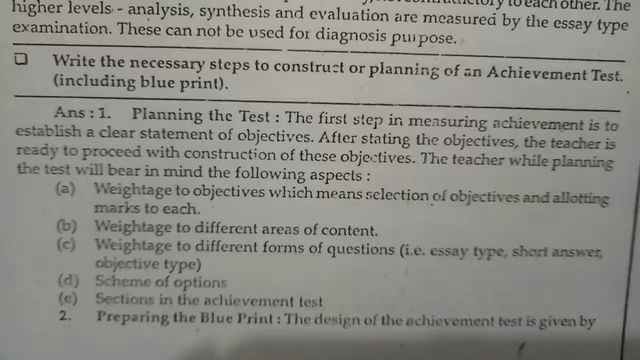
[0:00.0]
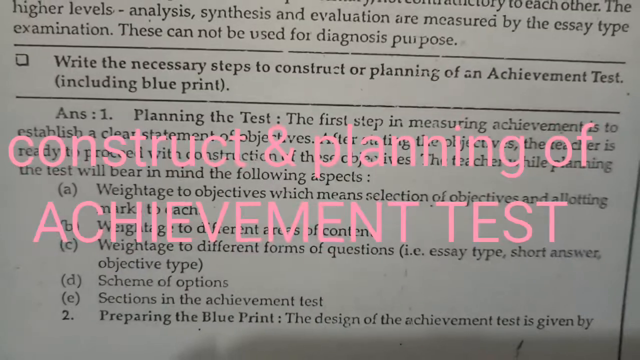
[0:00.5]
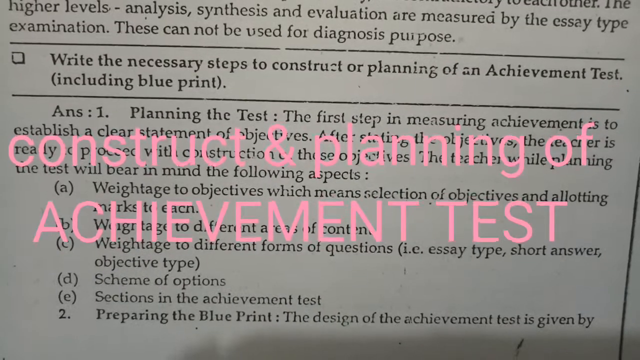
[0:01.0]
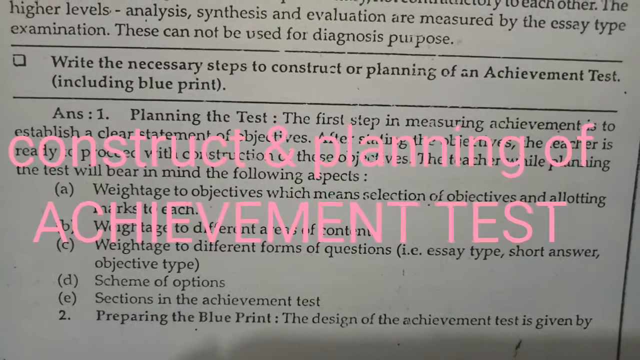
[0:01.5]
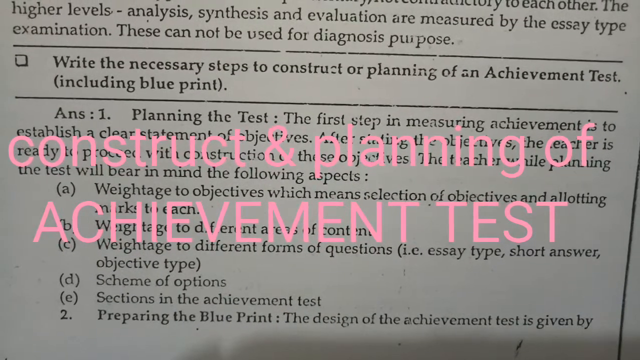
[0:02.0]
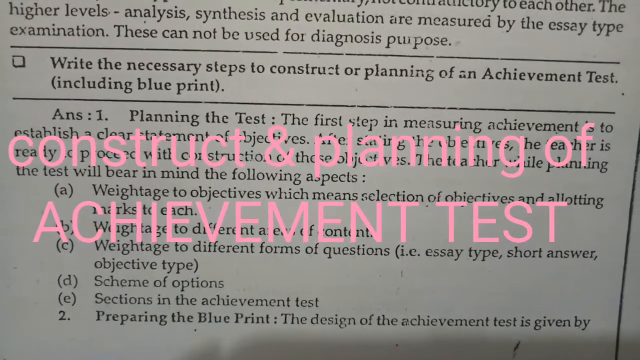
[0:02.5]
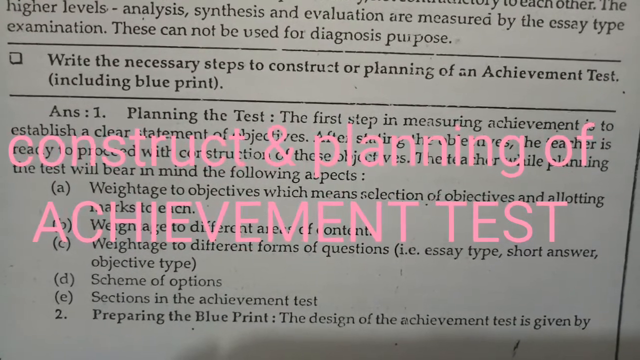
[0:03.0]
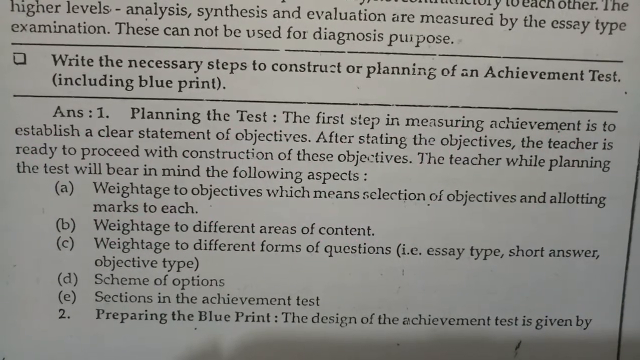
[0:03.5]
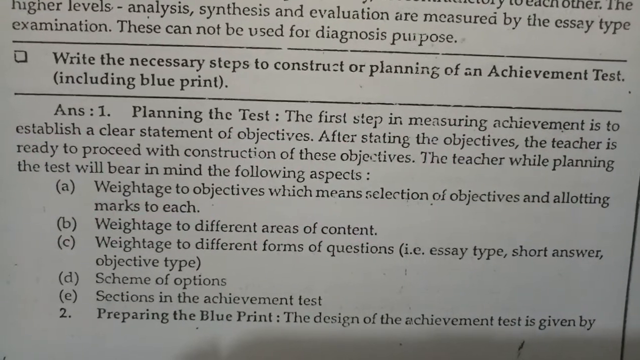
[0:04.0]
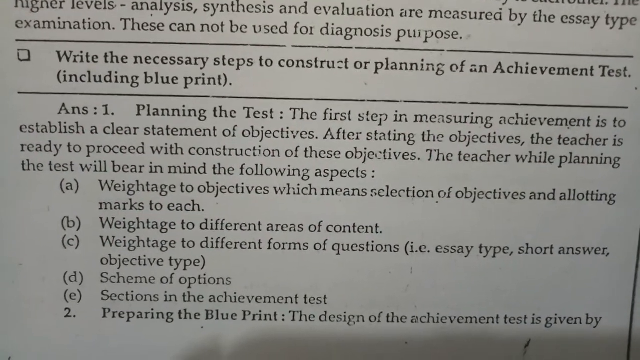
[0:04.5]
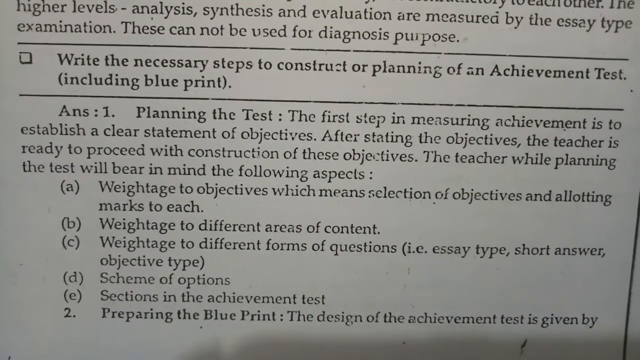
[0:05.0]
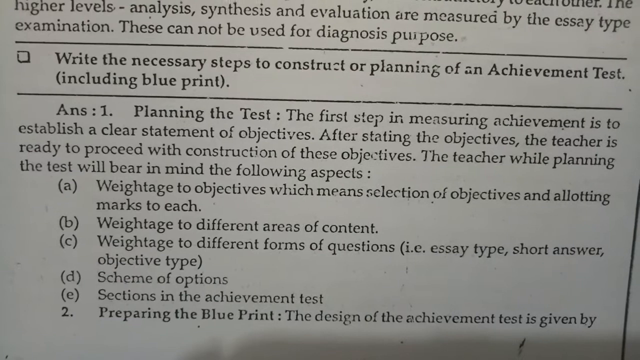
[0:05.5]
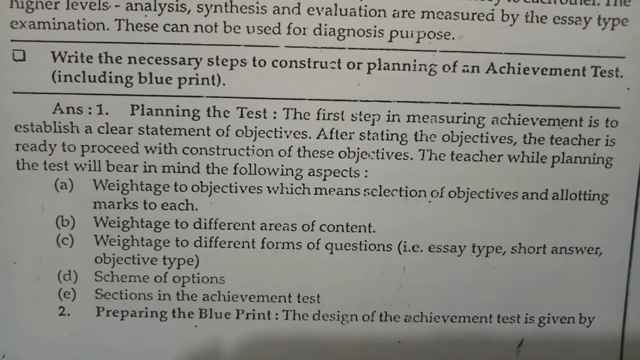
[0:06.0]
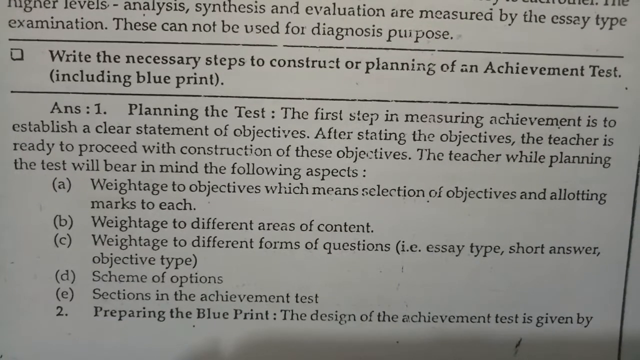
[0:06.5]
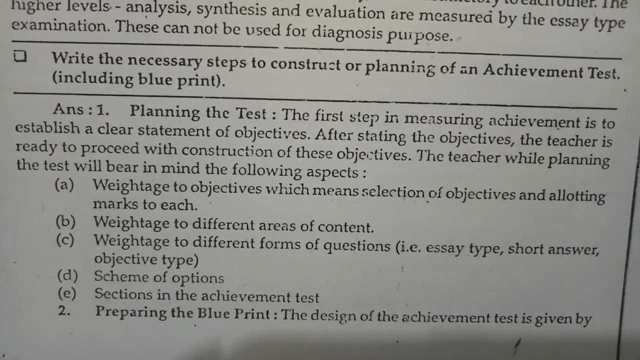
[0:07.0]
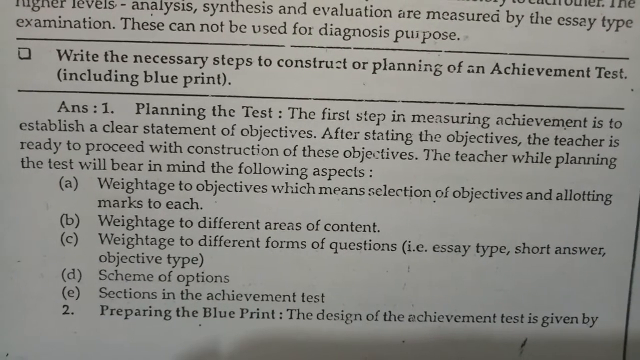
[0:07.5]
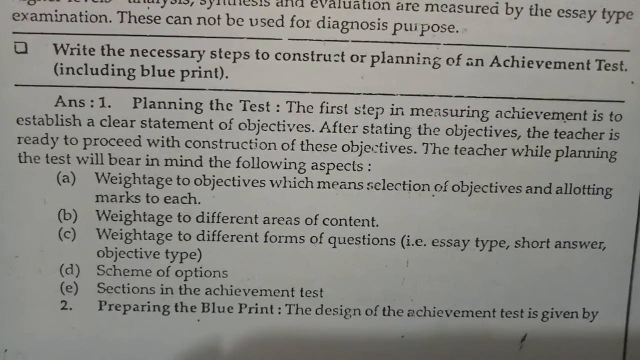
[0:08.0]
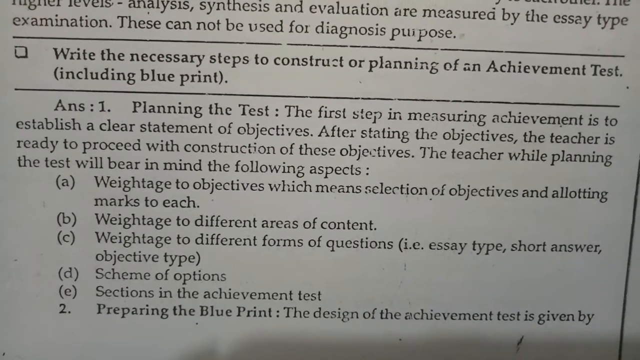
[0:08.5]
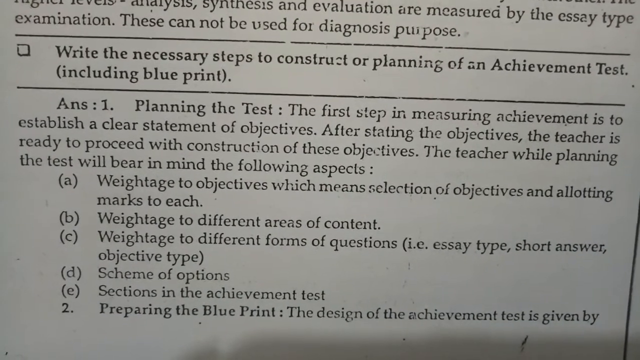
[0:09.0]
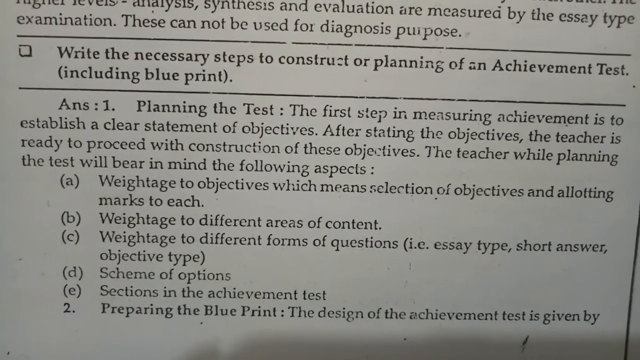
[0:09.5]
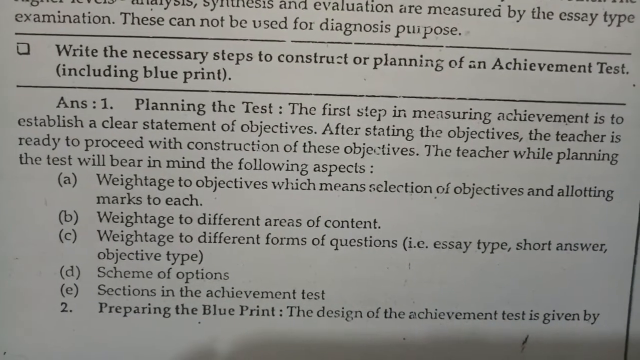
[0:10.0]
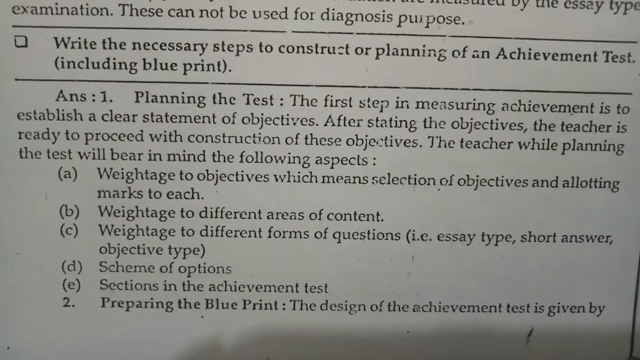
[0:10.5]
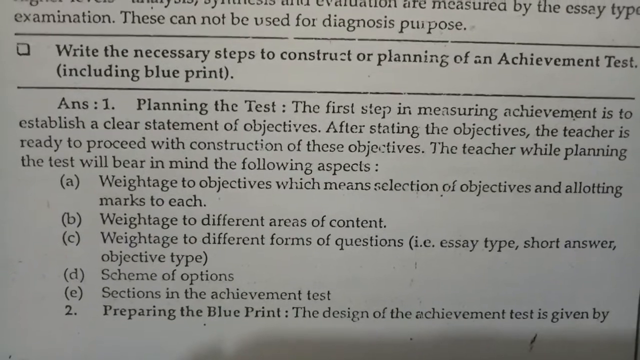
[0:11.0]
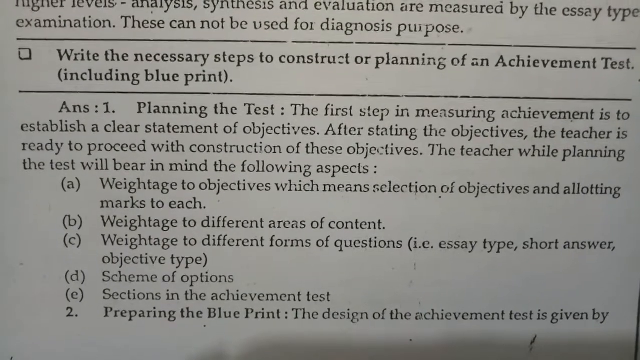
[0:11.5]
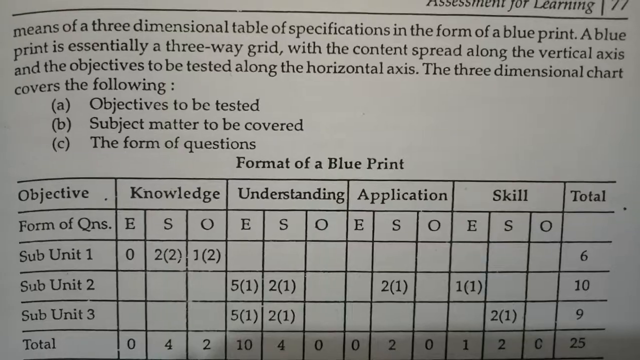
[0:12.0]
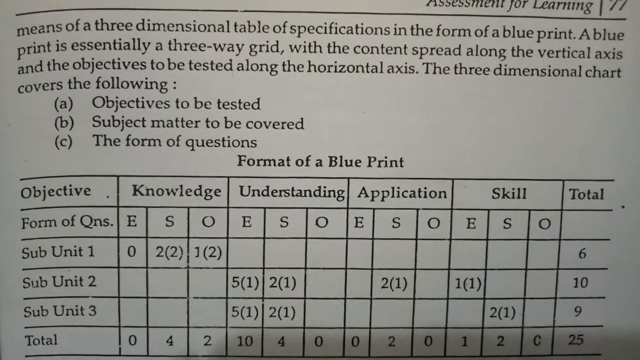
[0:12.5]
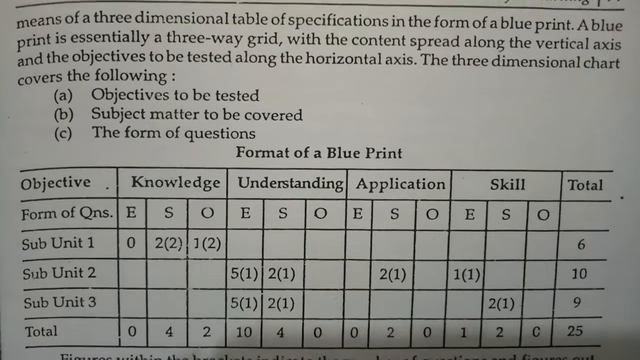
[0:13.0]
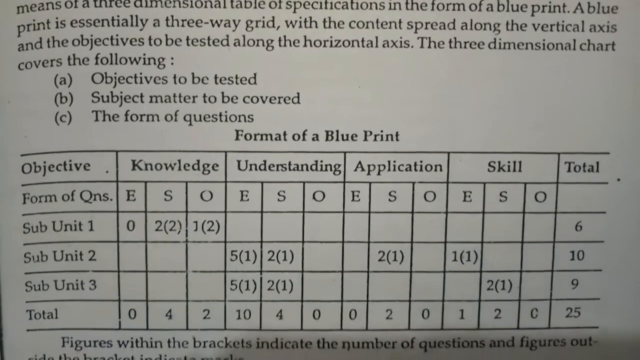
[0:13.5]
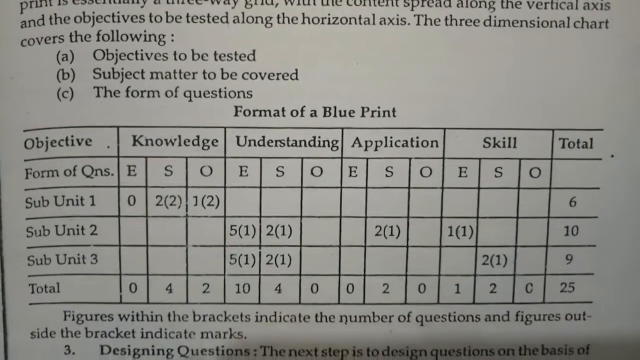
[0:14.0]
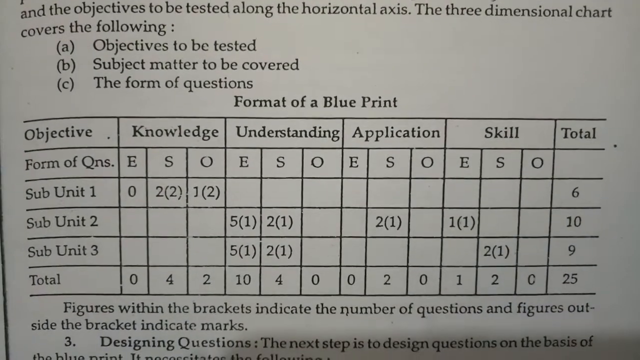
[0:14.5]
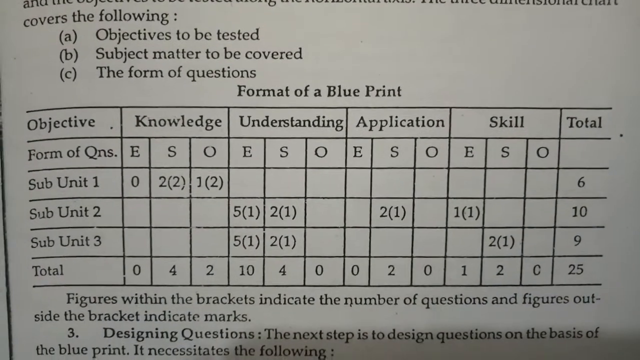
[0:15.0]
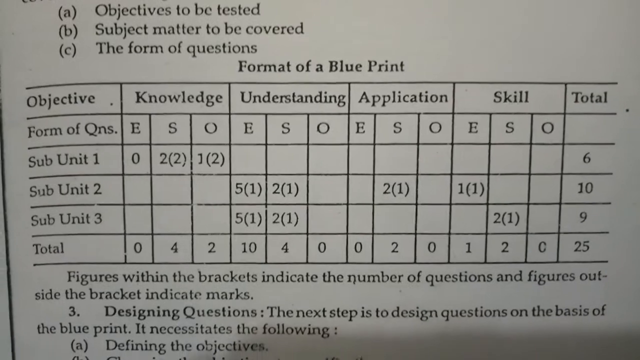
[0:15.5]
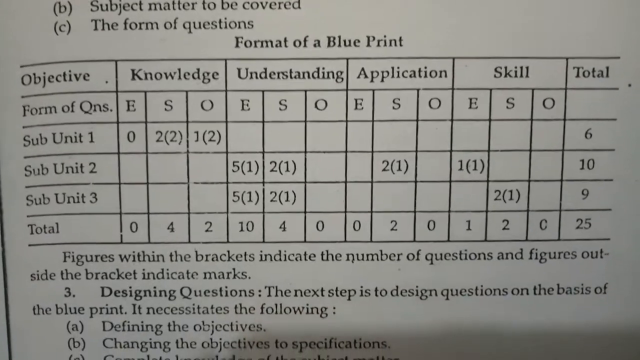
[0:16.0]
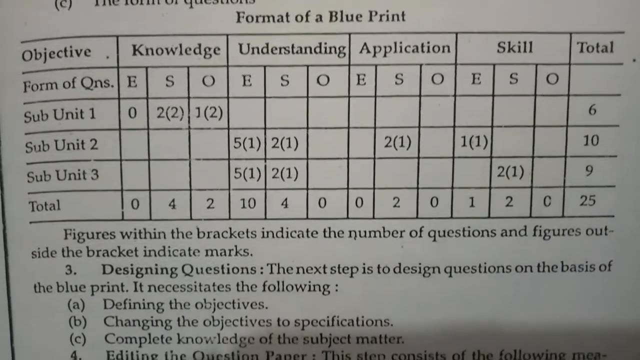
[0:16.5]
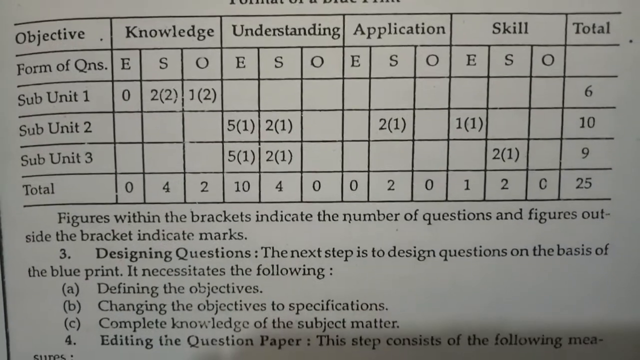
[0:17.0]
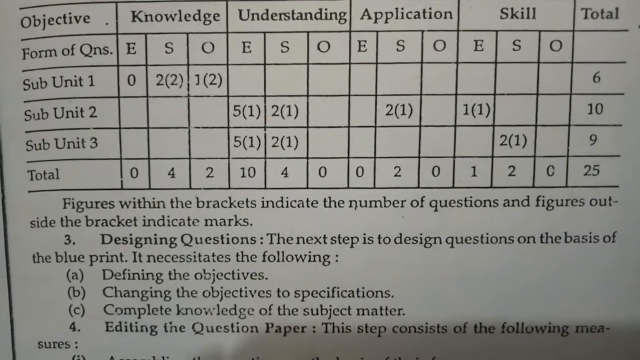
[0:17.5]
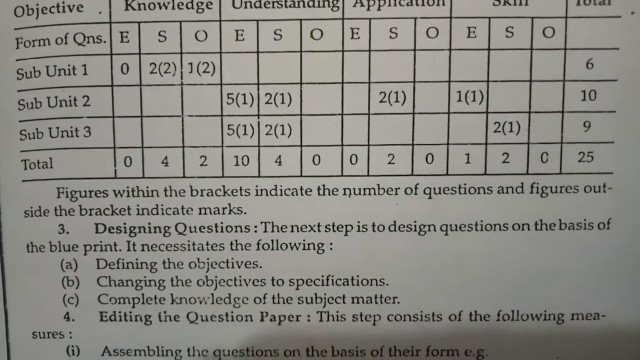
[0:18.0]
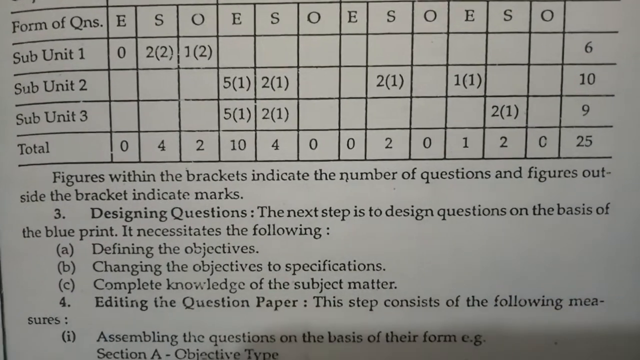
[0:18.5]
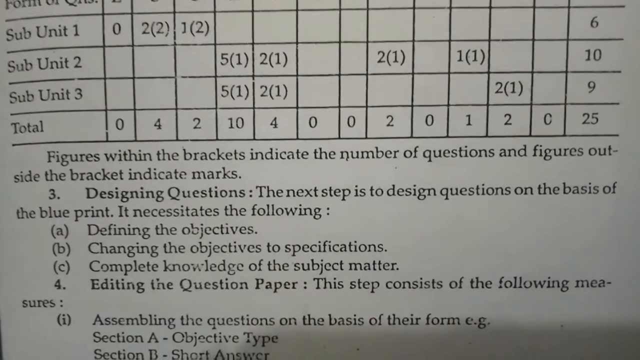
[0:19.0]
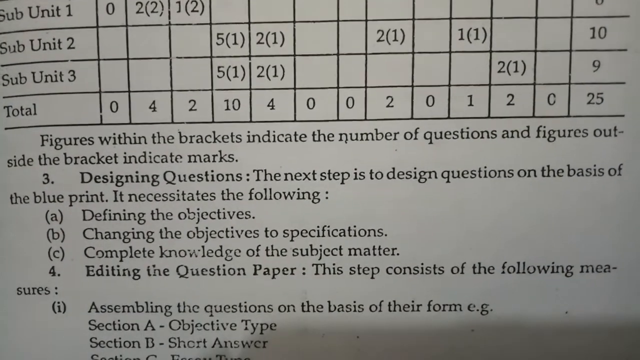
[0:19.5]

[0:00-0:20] The video opens on a close-up of black text on a white background, sort of typical paper, with pink text over the top reading "construct and planning of achievement test." The pink text disappears so the section in focus can be read fully. At the top it says "write the necessary steps to construct or planning of an achievement test including blueprint," followed by several list items beneath. Next comes a table titled "format of a blueprint," with the categories "objective," "knowledge," "understanding," "application," "skill," and "total." Above the table are the points A, "objectives to be tested," B, "subject matter to be covered," and C, "the form of questions." The video pans down a little so the whole table can be seen, and there is additional explanation at the very bottom.